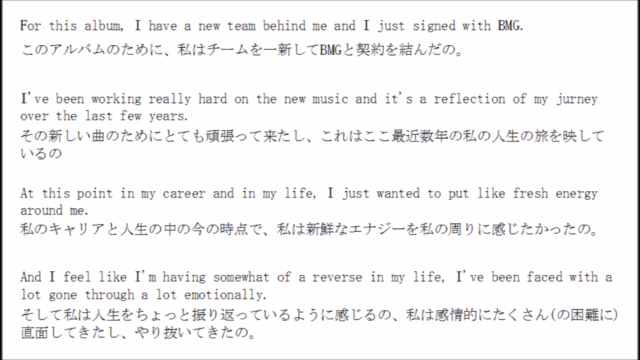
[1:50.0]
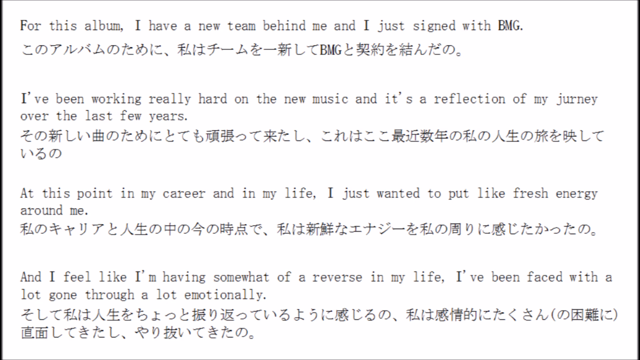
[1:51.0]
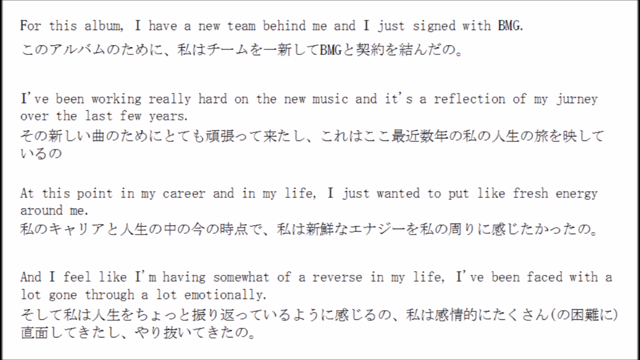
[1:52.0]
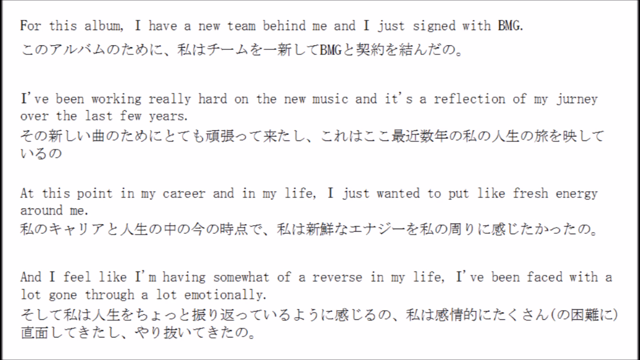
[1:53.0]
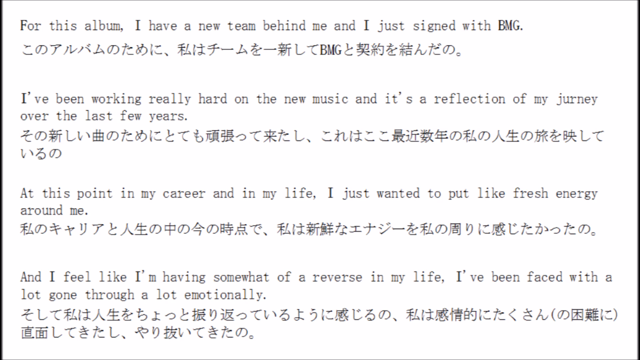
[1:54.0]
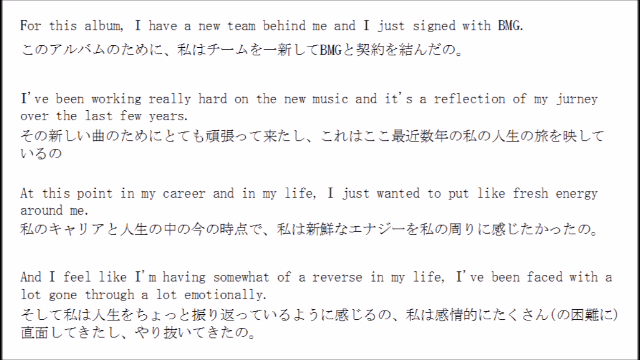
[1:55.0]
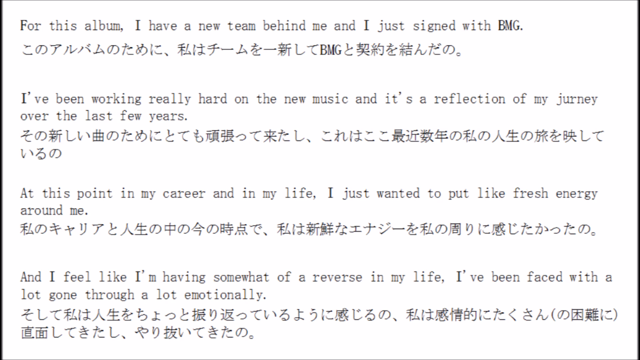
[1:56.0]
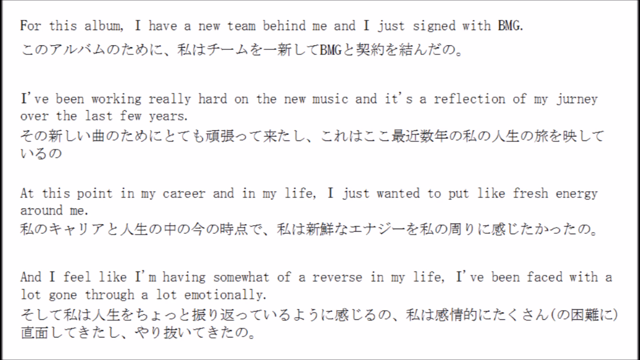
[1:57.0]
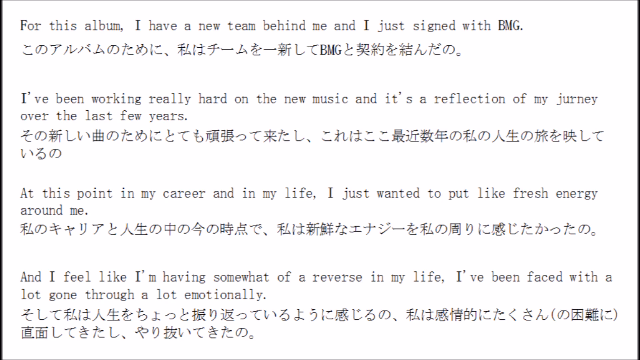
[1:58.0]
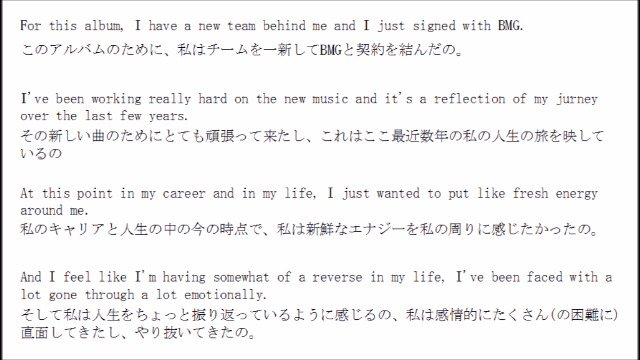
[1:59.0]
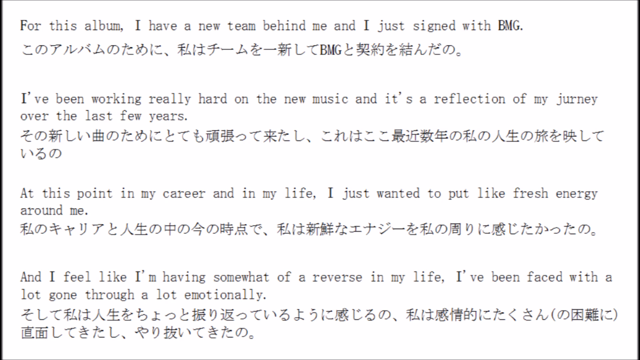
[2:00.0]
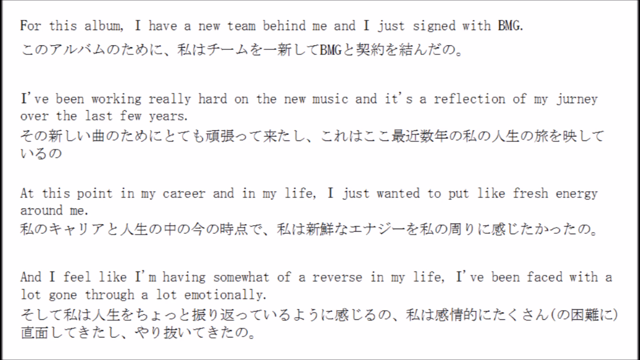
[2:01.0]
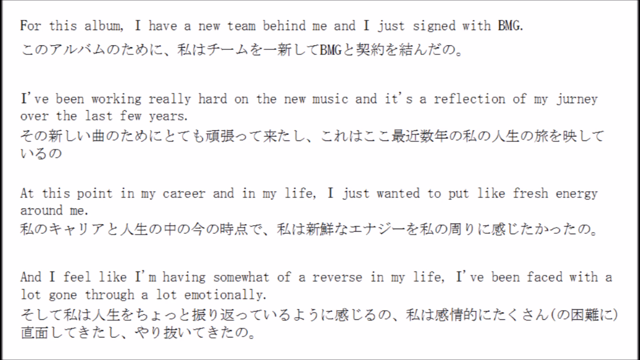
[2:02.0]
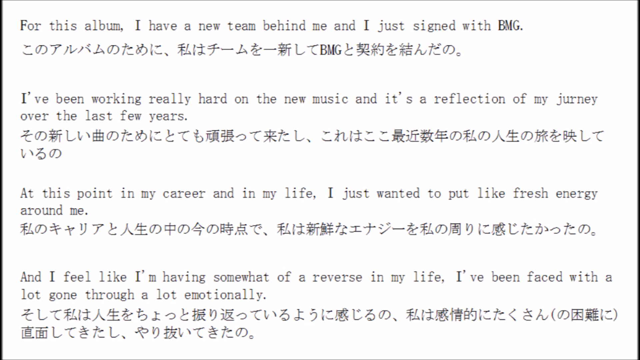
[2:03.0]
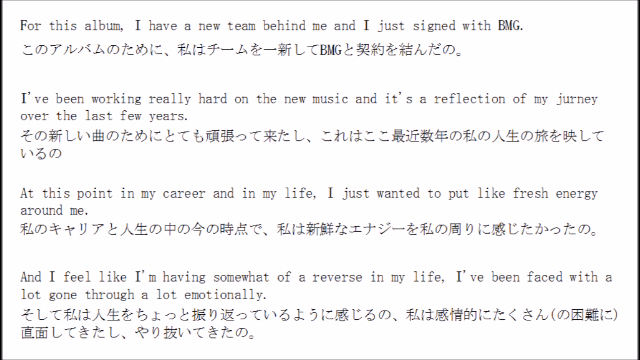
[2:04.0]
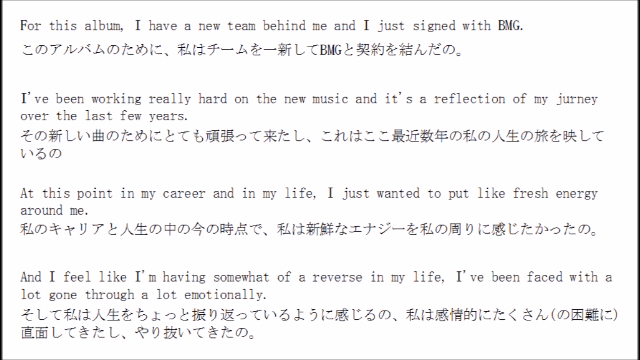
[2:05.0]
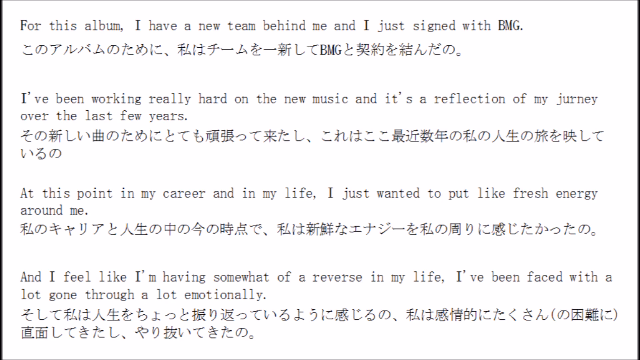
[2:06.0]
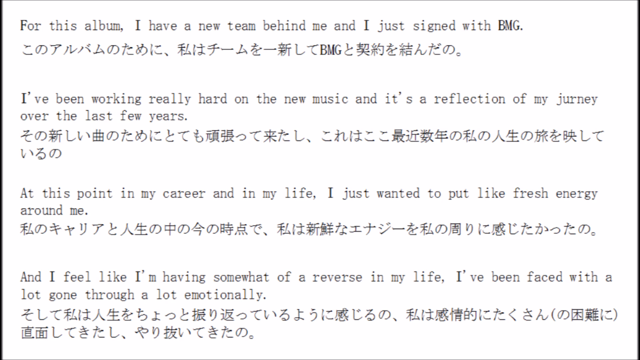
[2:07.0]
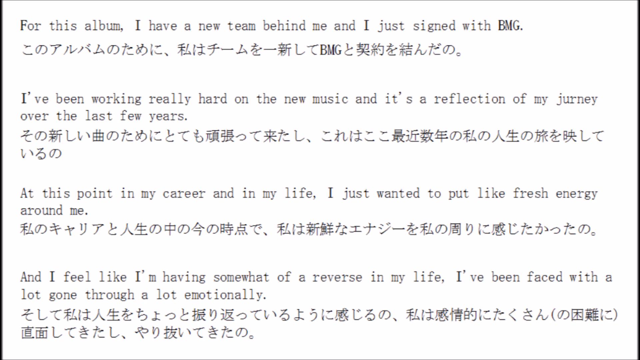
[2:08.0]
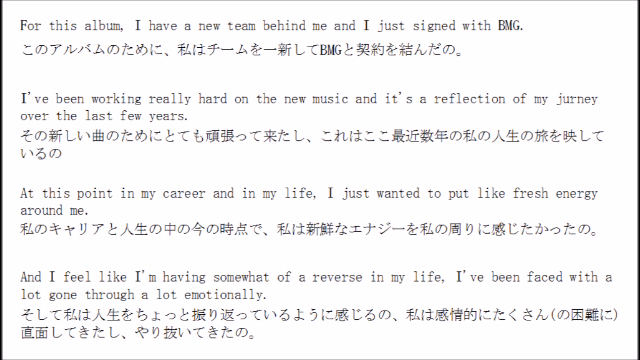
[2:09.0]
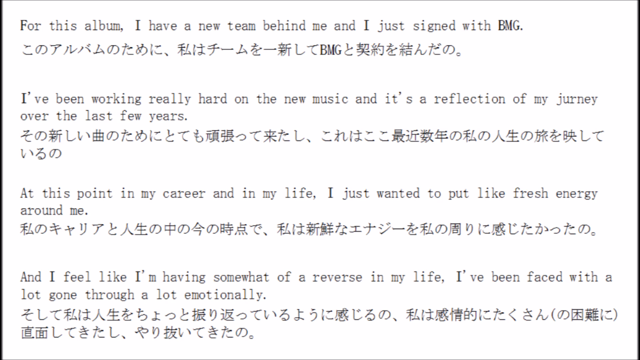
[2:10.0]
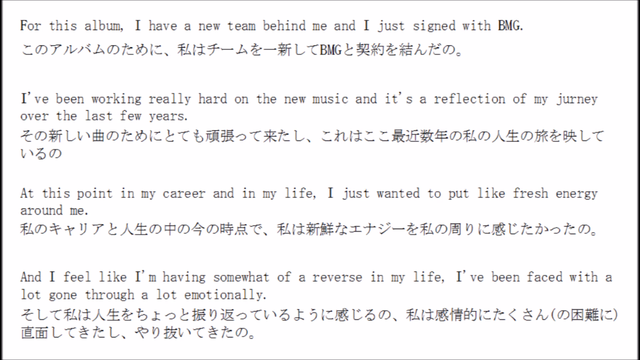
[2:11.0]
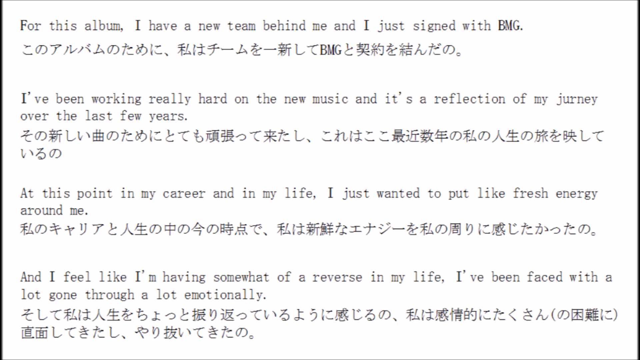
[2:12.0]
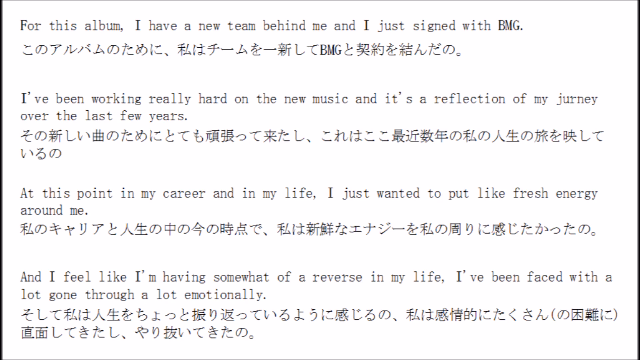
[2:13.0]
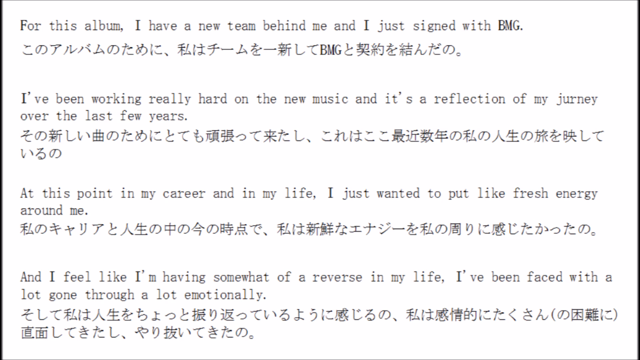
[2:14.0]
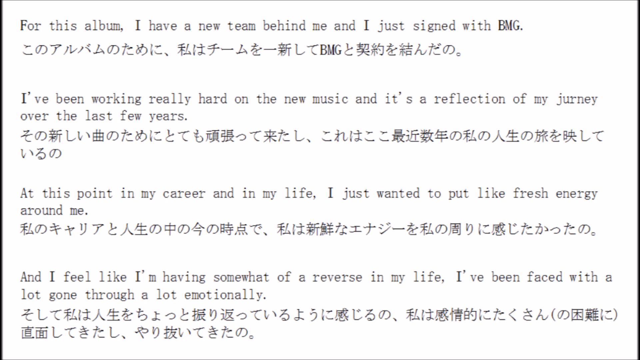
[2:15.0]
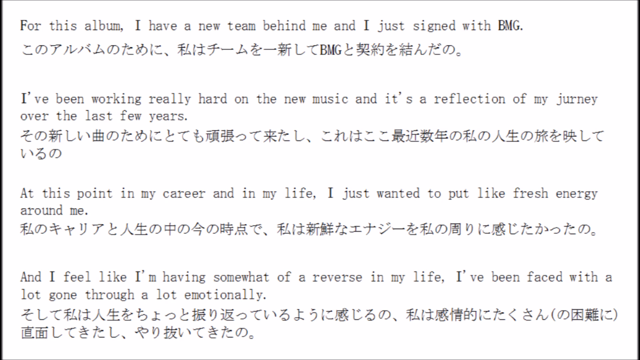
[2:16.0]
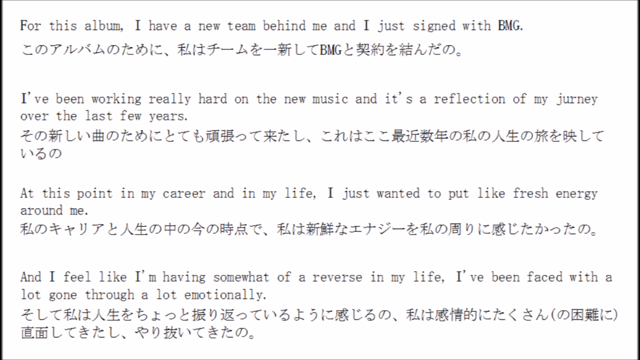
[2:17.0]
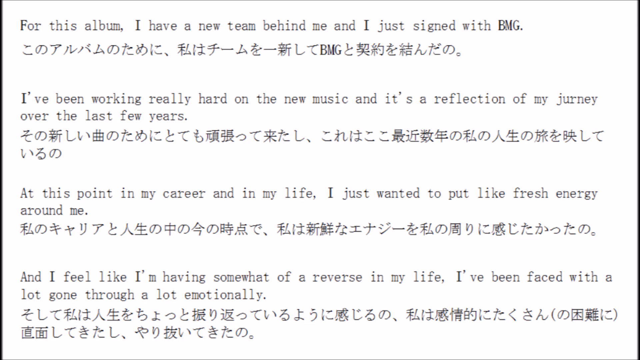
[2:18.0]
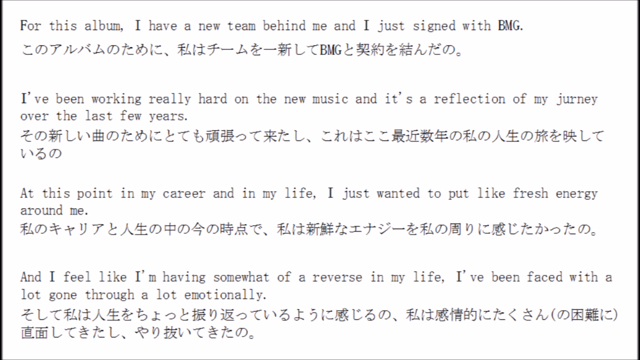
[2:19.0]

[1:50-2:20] The interview text, perhaps an answer to a question, is on screen: "for this album. I have a new team behind me and I just signed with BMG, been working really hard on new music and it's a reflection of my journey over the last few years. At this point in my career and in my life, I just wanted to put my fresh energy around me and I feel like I'm having somewhat of a reverse in my life. I've been faced with a lot, going through a lot emotionally." The English text is accompanied by a language that is not English, on a white background. It is a language that uses written symbols, possibly Japanese or Chinese, with various symbols. Proper names such as BMG are written in English lettering. The non-English text has periods in some places, though not everywhere, and other punctuation elsewhere.